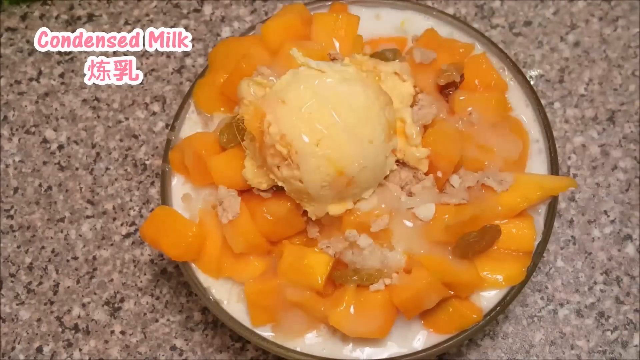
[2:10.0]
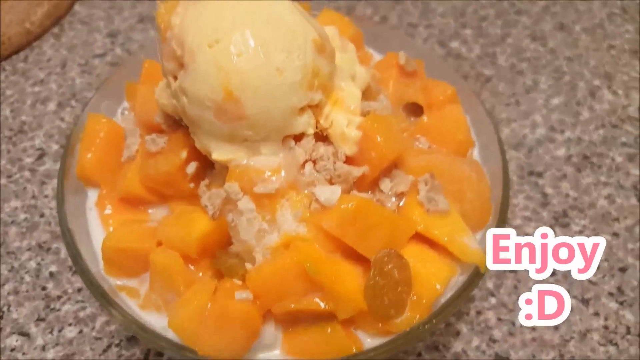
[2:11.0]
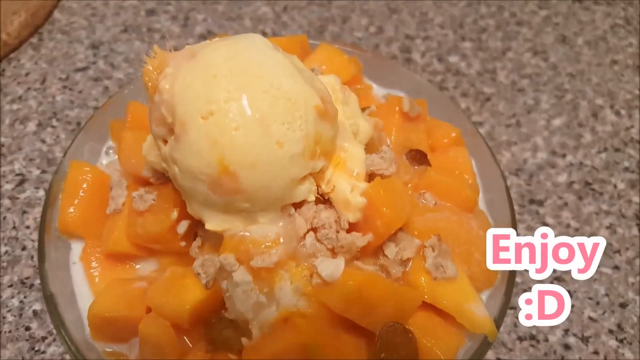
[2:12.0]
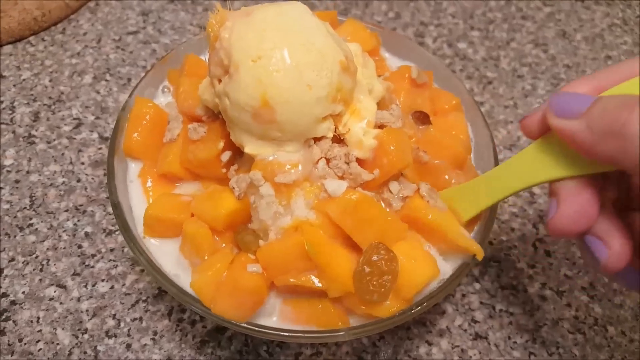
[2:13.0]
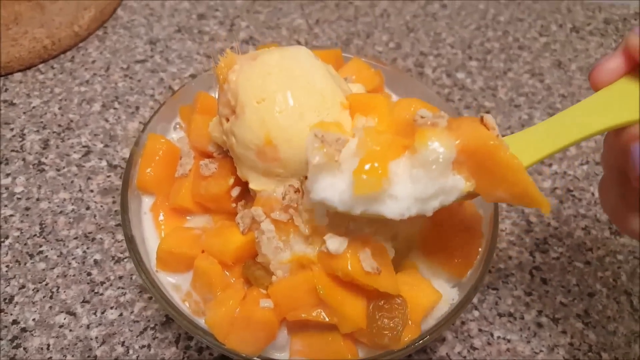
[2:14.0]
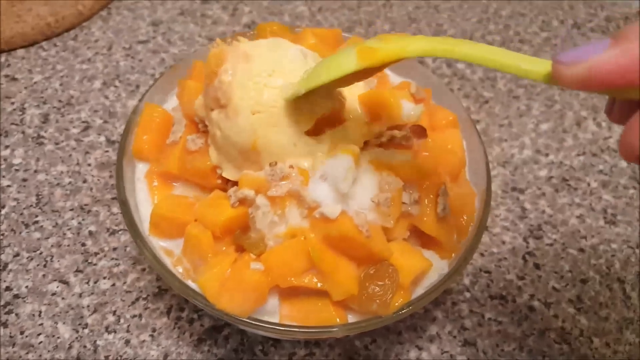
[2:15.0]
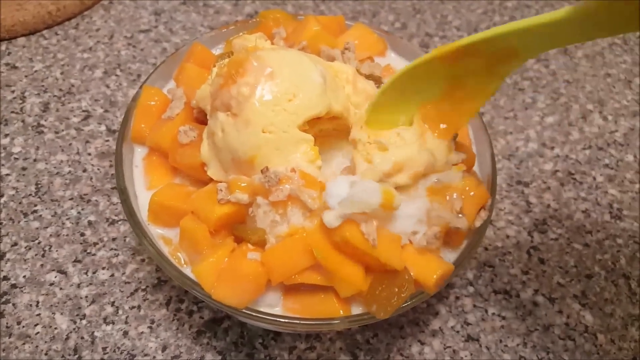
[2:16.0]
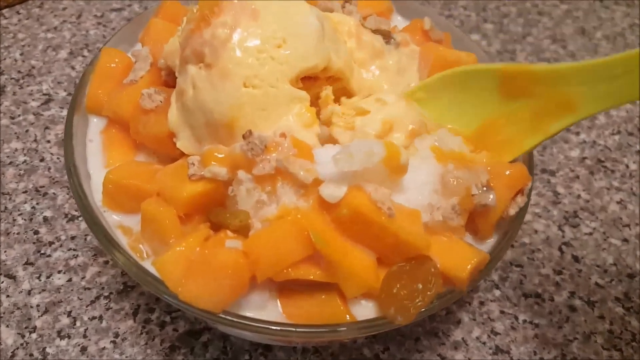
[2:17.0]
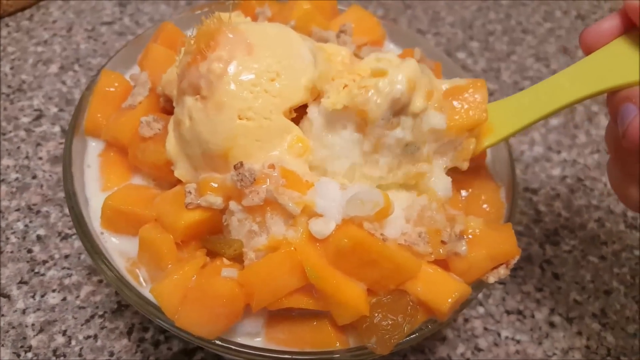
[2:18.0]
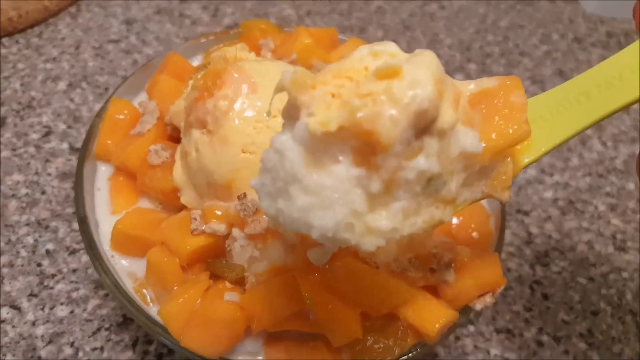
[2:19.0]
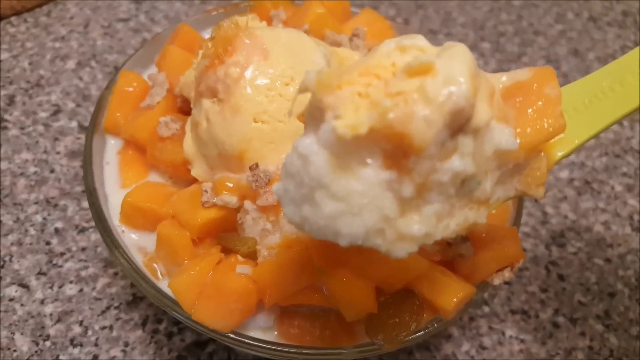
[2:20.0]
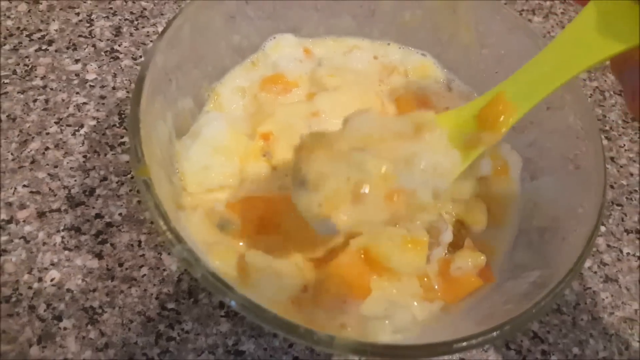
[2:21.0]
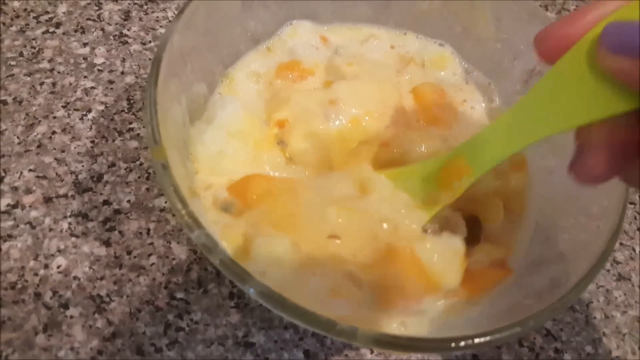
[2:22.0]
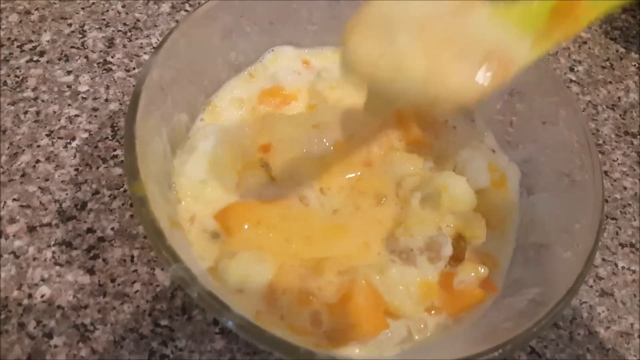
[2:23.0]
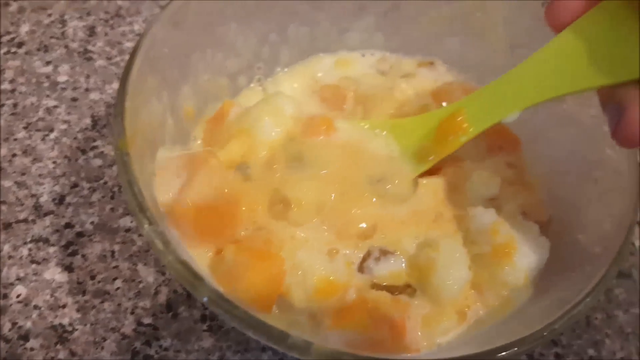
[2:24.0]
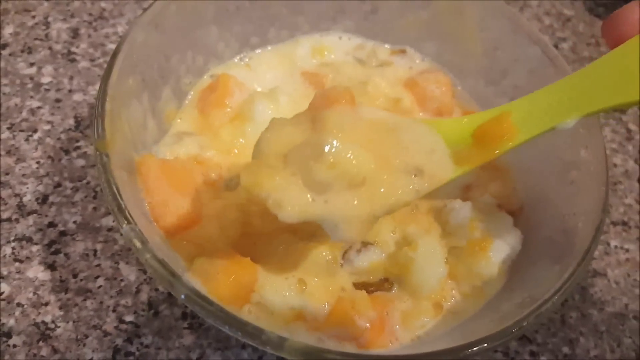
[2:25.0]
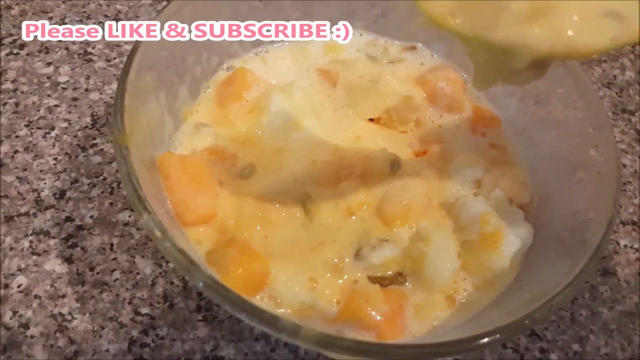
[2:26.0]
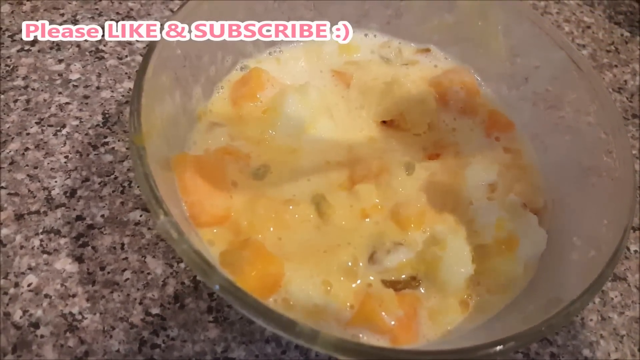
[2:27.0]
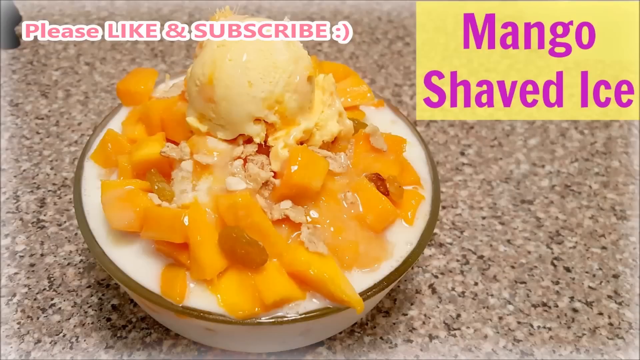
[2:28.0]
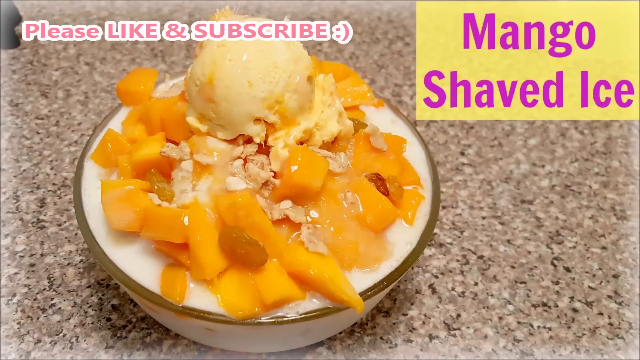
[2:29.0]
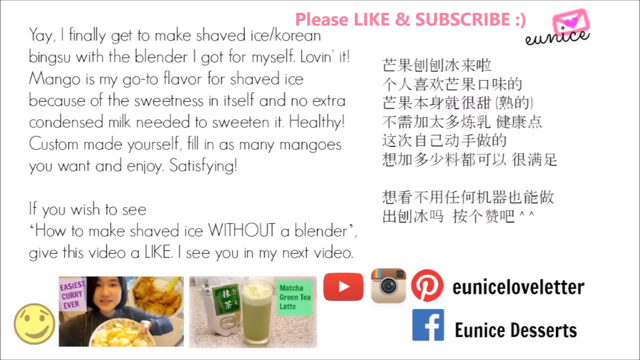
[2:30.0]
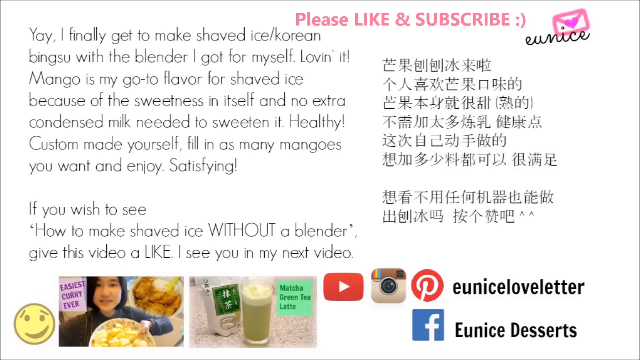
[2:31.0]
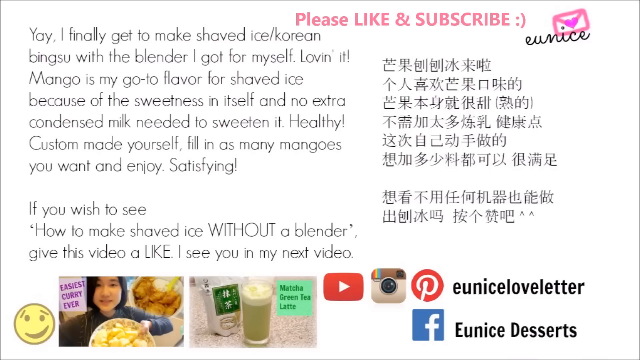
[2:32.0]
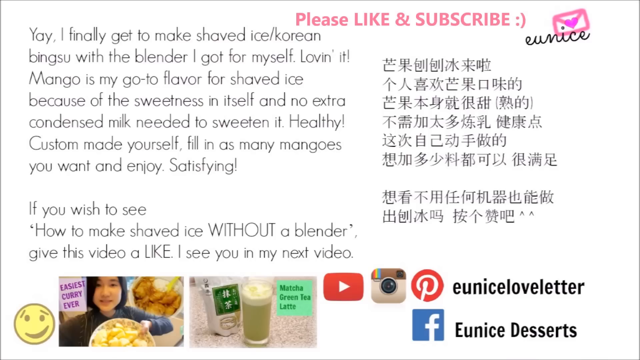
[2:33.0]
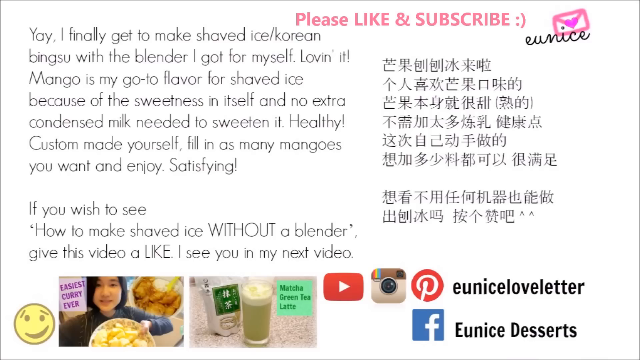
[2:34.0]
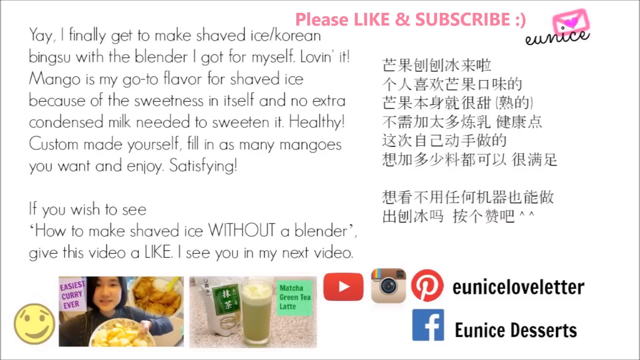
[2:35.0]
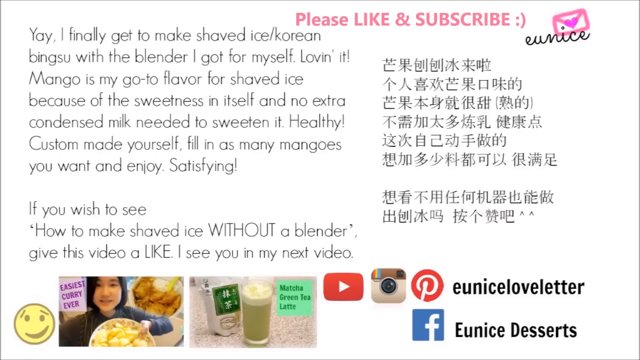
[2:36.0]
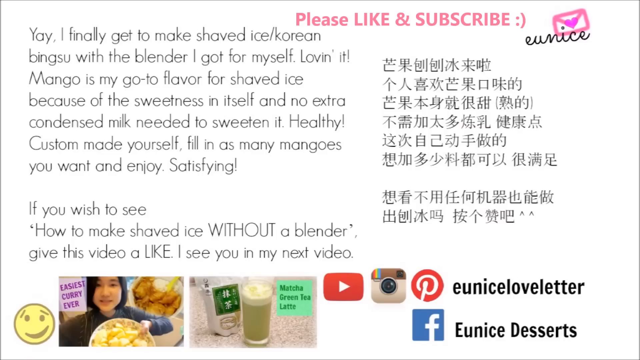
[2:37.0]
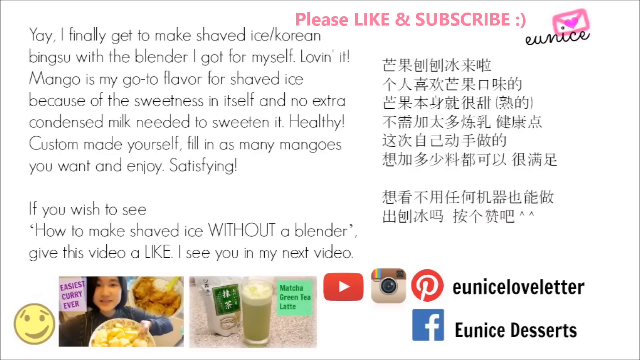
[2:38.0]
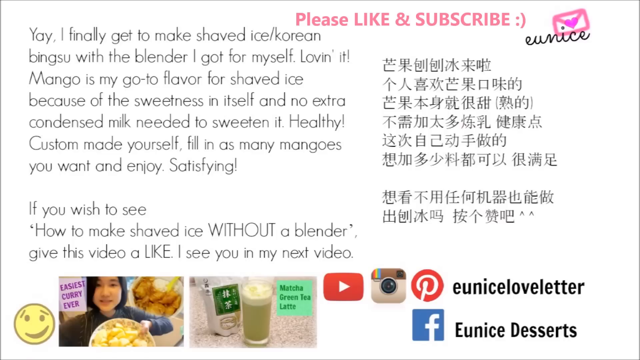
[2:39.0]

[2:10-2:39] Text that says "enjoy" appears as the final presentation of the shaved ice is shown in a glass bowl, with the ice cream on top and toppings of fresh mango, passion fruit apparently mixed in, raisins, and oat flakes. The person eats the mango shaved ice with a small lime green spoon. Text appears that says "please like and subscribe", with the shaved ice shown, followed by a transition screen with a picture of it and a "please like and subscribe" screen for uni nice desserts. Text is then shown reading "Yay i finally get to make shaved/ice/korean bingsu with a blender i got for myself loving it mangoes my go-to flavor for shaved ice because the sweetness in itself and no extra condensed milk needed to sweeten it healthy custom made yourself fill as many mangoes you want and enjoy if you wish to see how to make shaved ice without a blender give this video a like i'll see you in my next video".